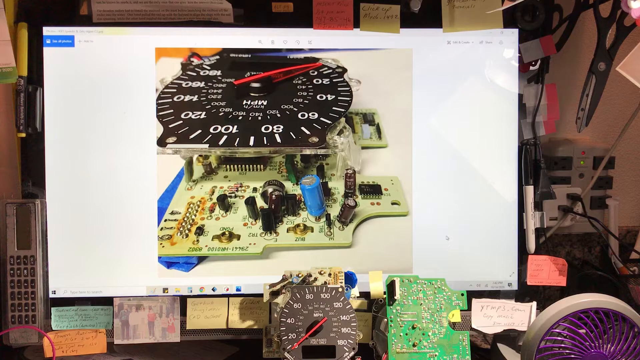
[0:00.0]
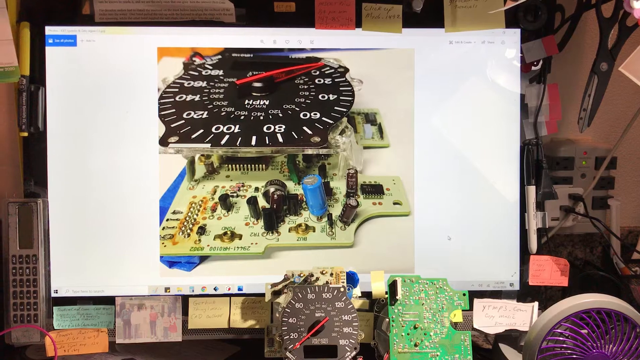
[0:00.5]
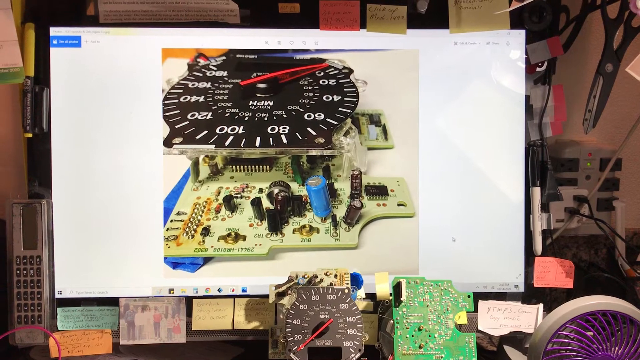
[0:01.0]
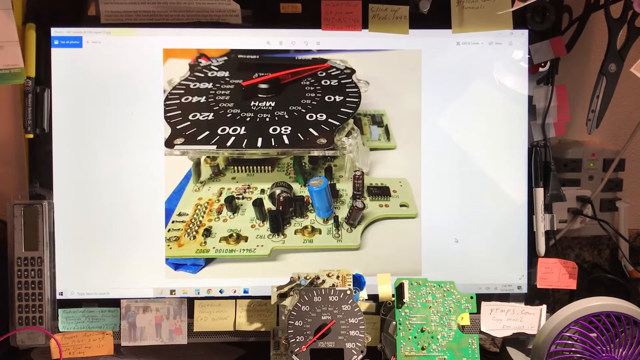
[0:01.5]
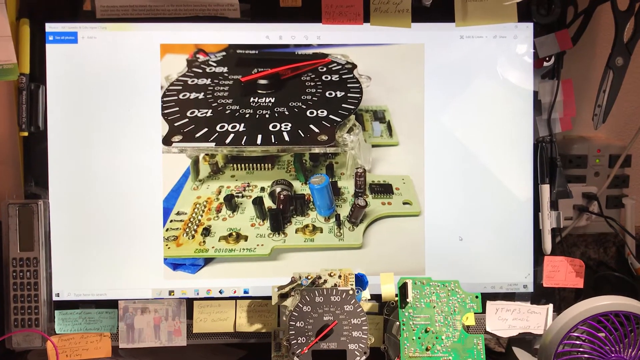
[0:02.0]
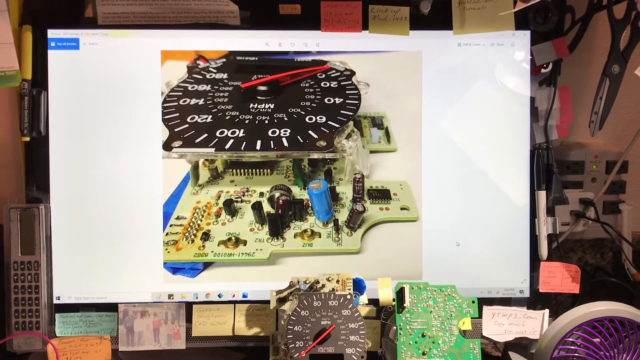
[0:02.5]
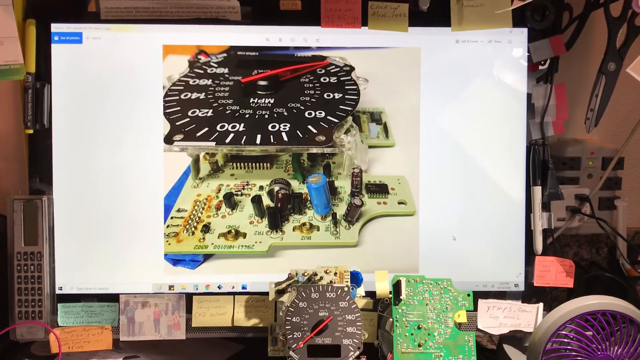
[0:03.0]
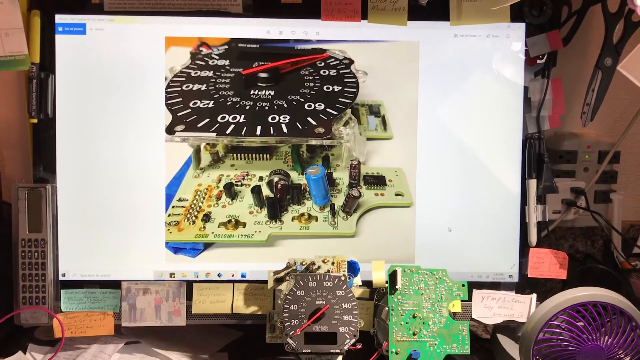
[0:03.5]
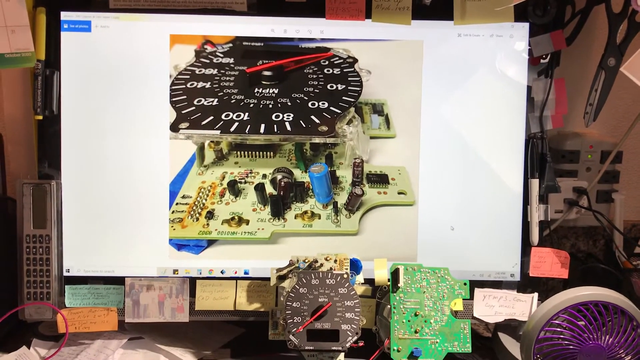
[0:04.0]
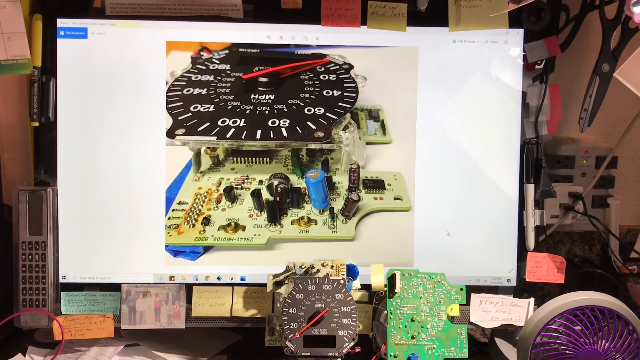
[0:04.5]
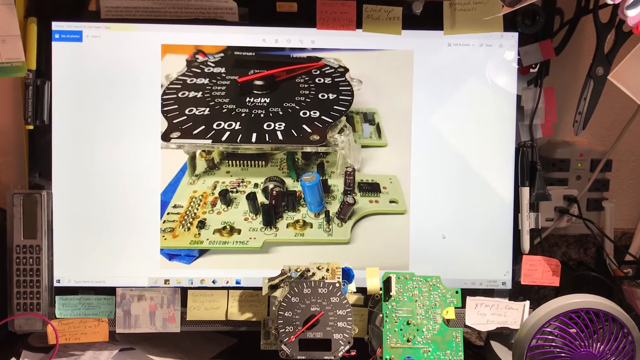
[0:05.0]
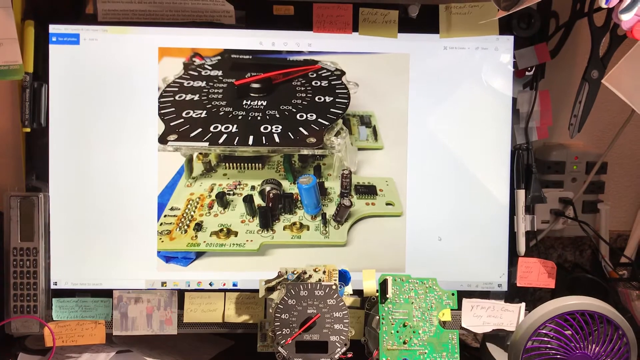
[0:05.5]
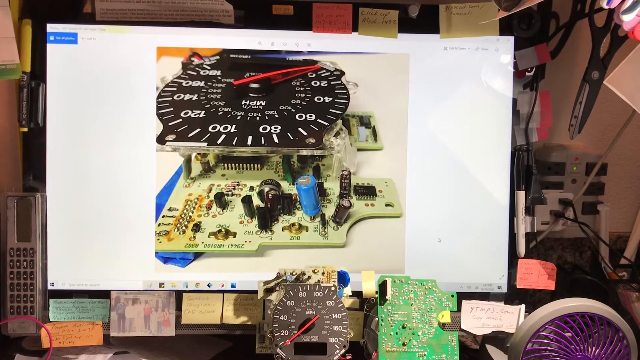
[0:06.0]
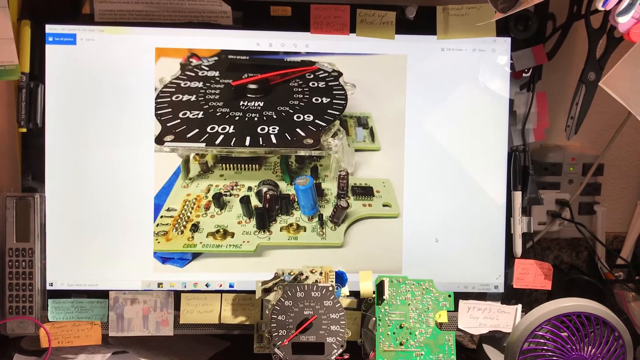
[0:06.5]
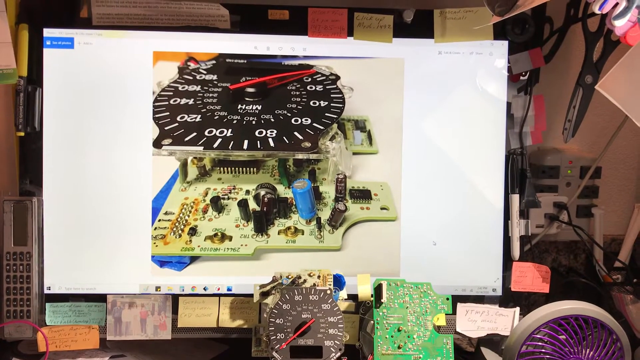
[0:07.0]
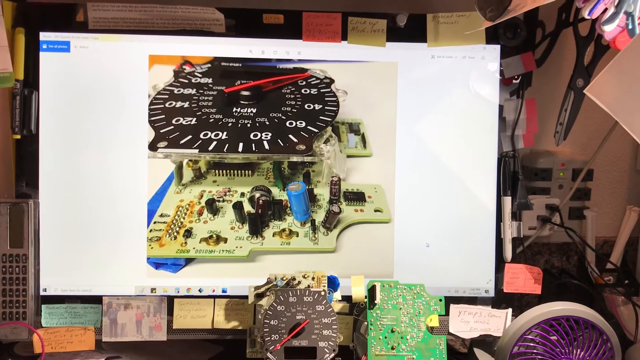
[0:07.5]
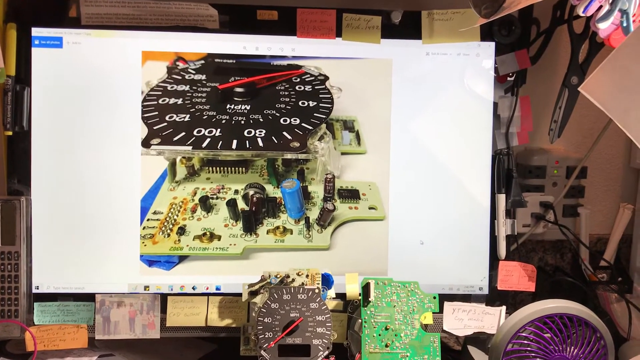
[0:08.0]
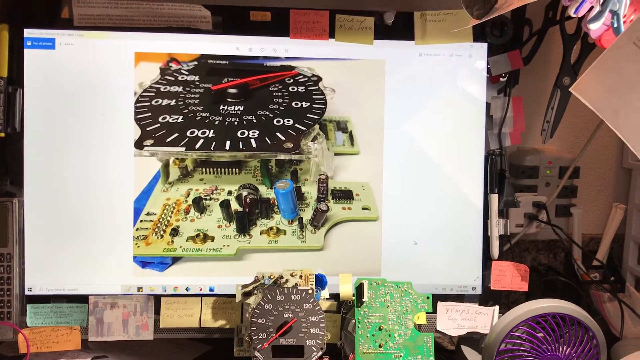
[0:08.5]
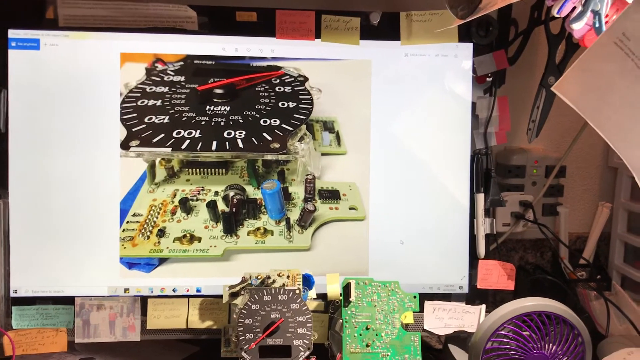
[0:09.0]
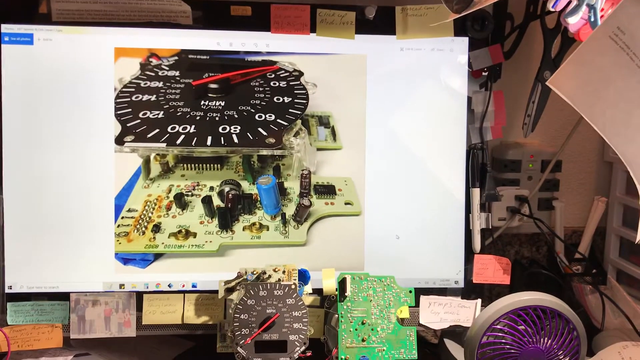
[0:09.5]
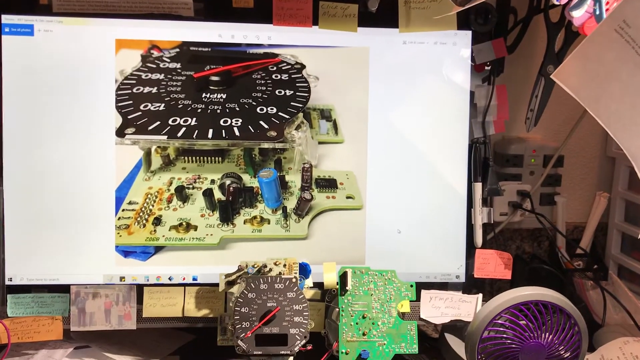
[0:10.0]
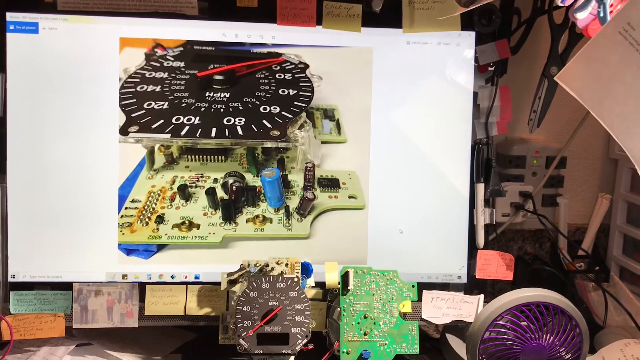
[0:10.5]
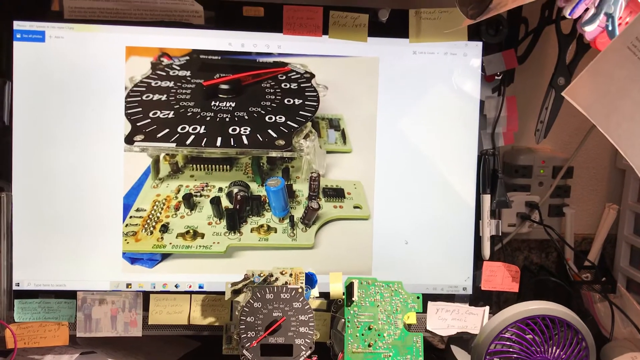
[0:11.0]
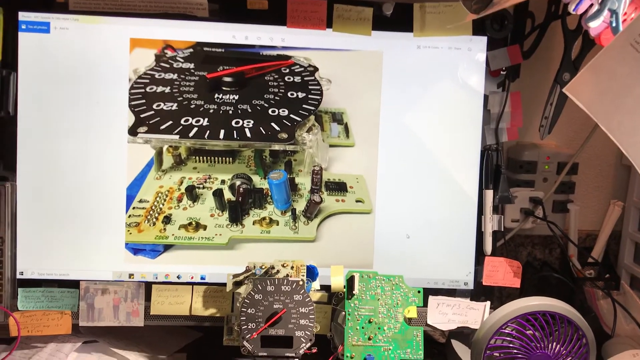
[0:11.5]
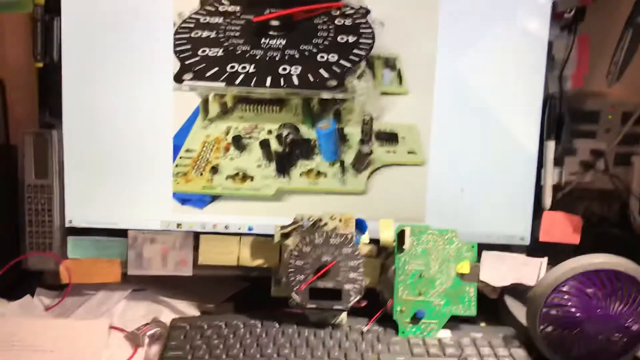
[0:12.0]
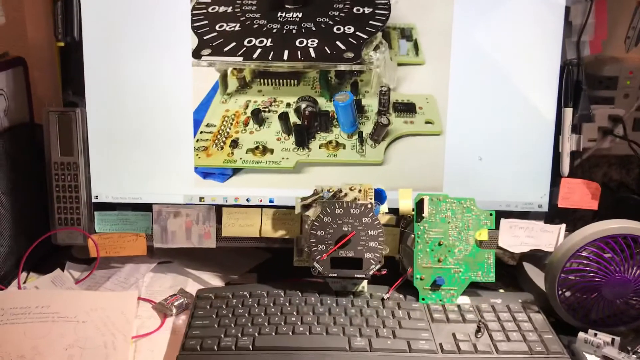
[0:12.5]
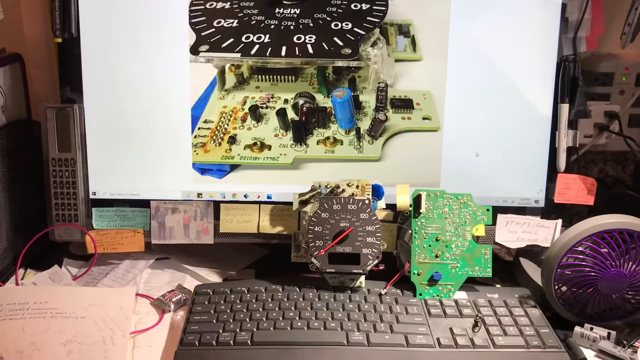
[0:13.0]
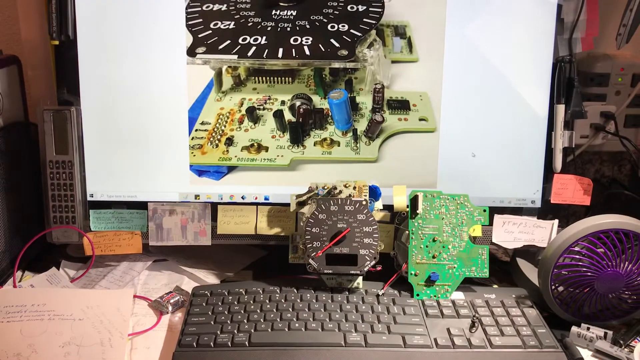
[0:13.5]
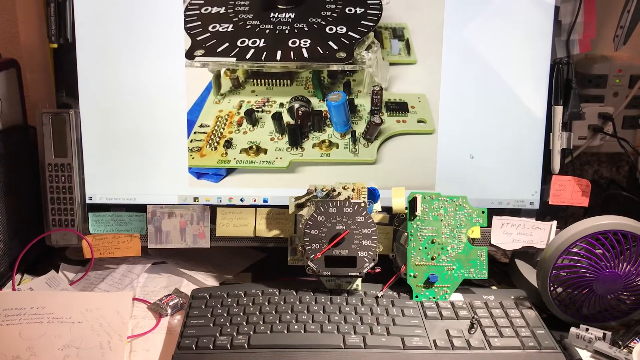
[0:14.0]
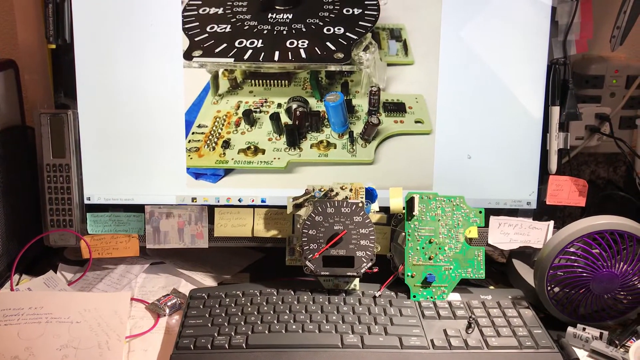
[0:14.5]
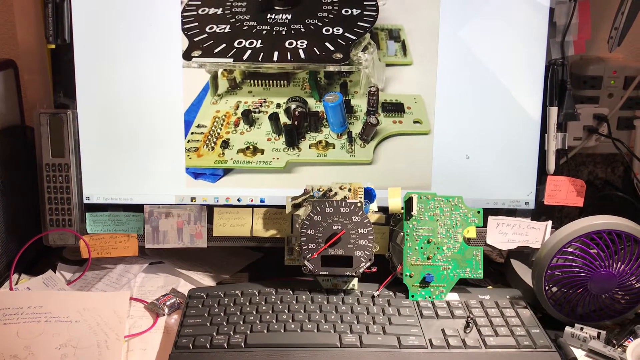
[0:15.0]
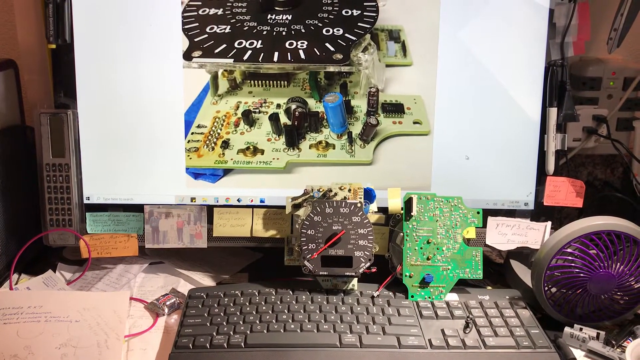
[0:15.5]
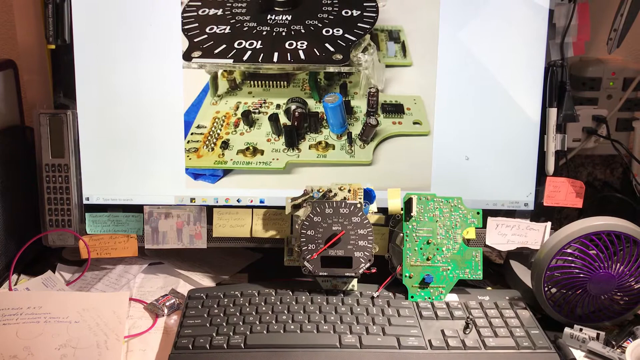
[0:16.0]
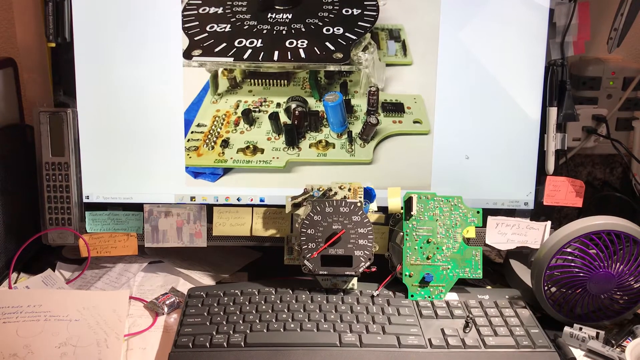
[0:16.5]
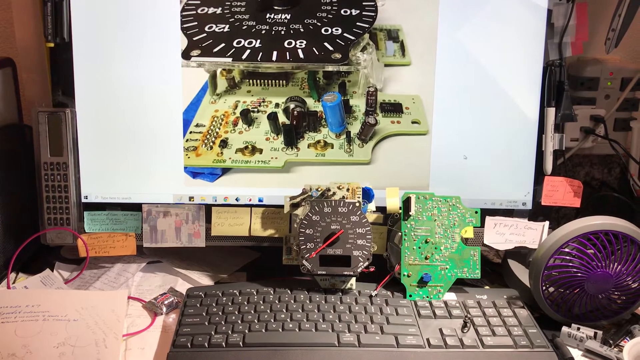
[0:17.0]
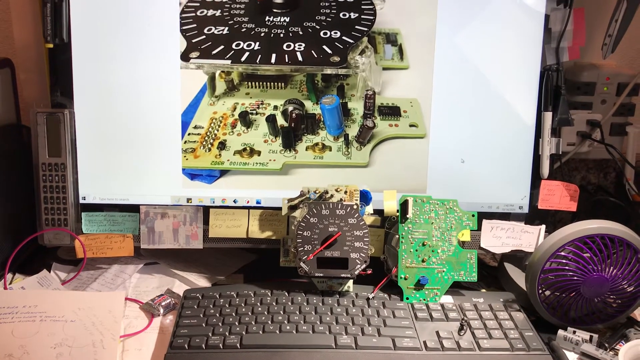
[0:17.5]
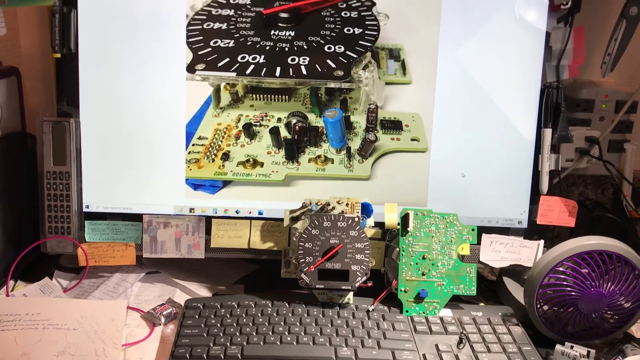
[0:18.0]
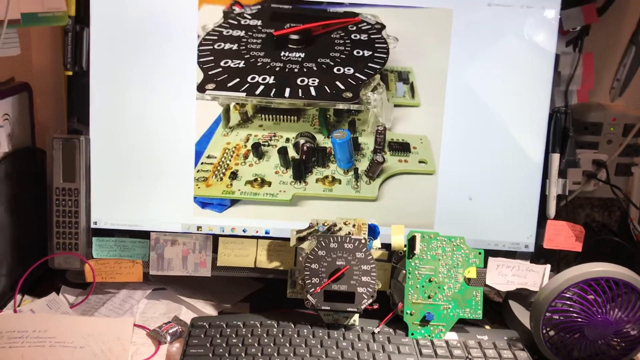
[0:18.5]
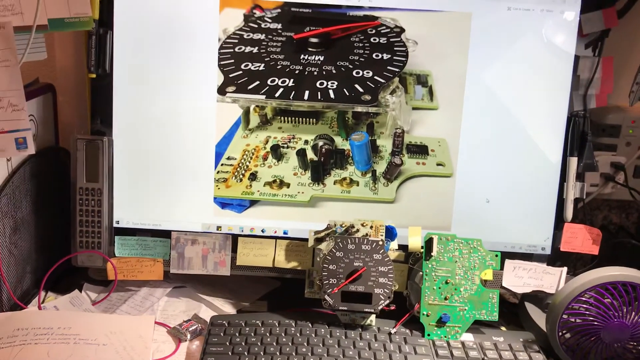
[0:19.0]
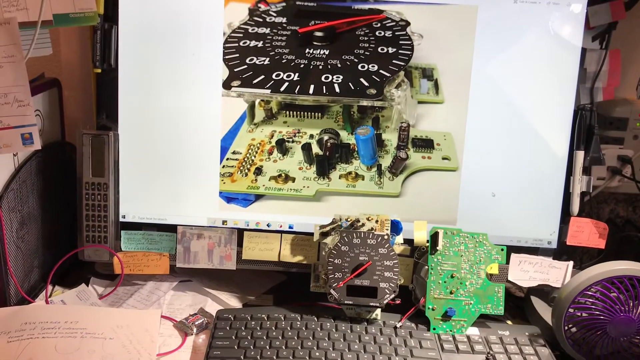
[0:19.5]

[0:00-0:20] A computer monitor shows a picture of a vehicle speedometer. The speedometer is out of the dash, not in a car, and is laying down; sitting below the monitor is the actual speedometer along with what looks like a CPU of some type. The setting looks like it may be a garage, though this is uncertain, with a lot of stuff hanging around. The monitor is very big and has post-it notes under it. On the screen there appears to be just a picture of the speedometer laying on its side. Wires hang out from the wall, there is a telephone, and what looks like scissors hangs on a shelf of some type. A power outlet is visible, and the area looks very congested. A fan with purple on it sits on the desk next to the keyboard.